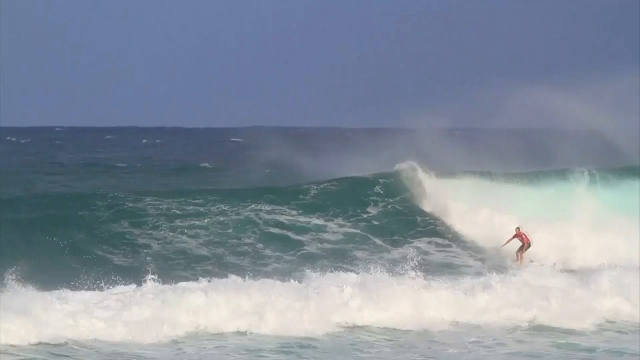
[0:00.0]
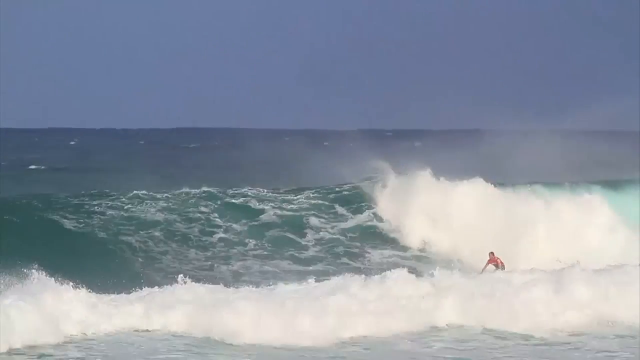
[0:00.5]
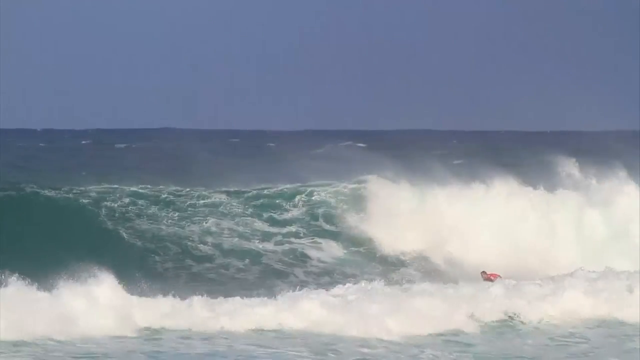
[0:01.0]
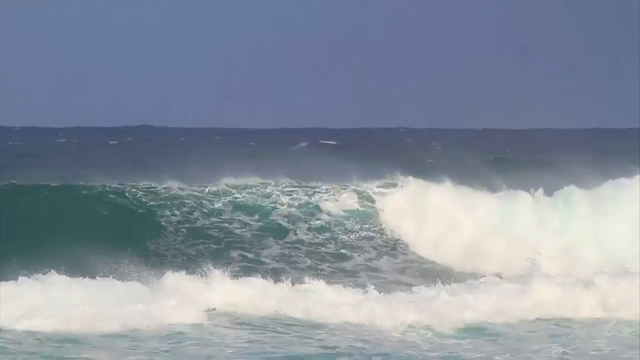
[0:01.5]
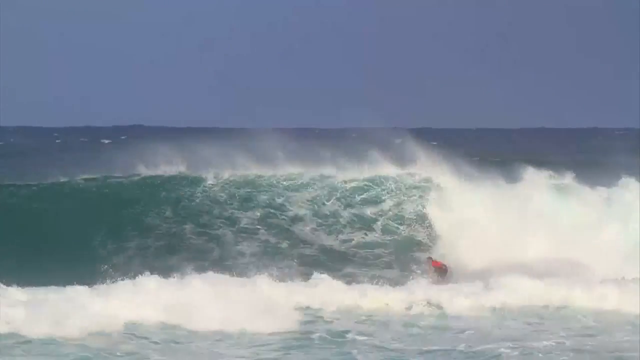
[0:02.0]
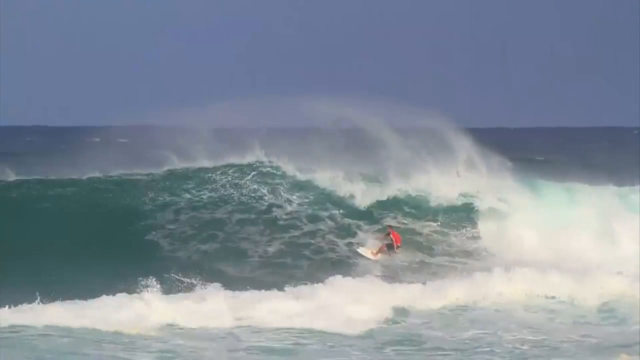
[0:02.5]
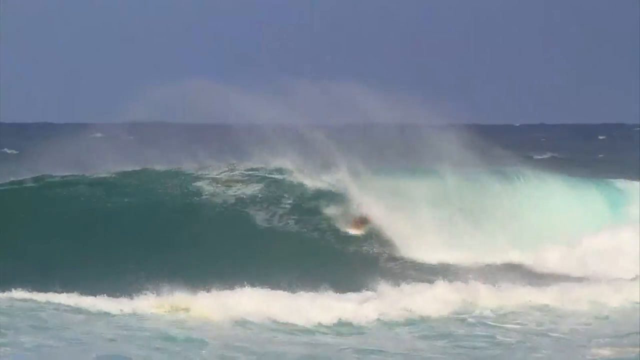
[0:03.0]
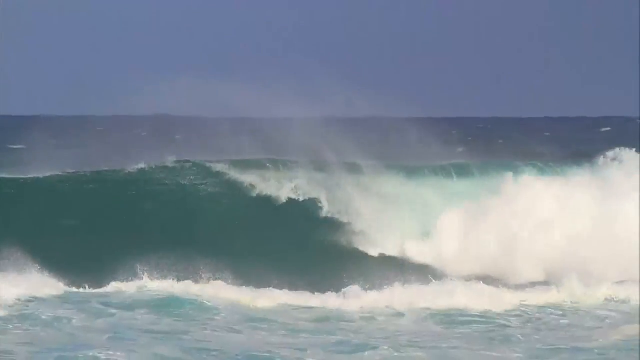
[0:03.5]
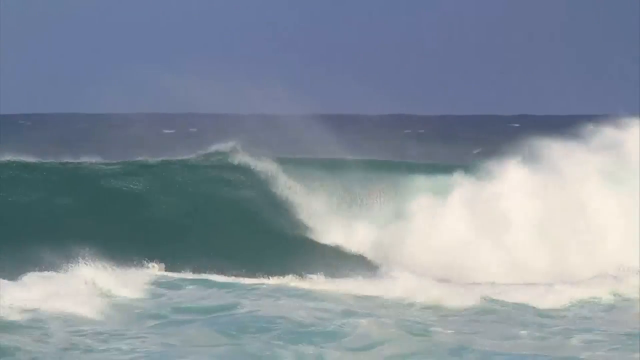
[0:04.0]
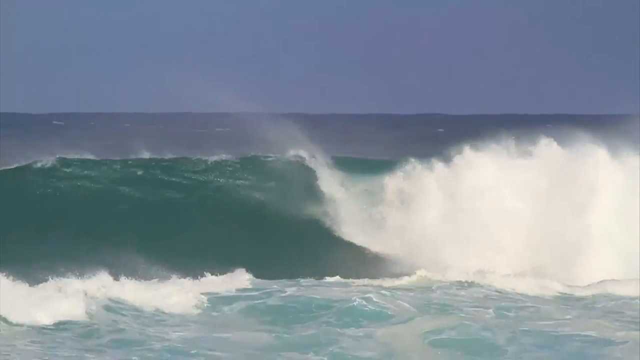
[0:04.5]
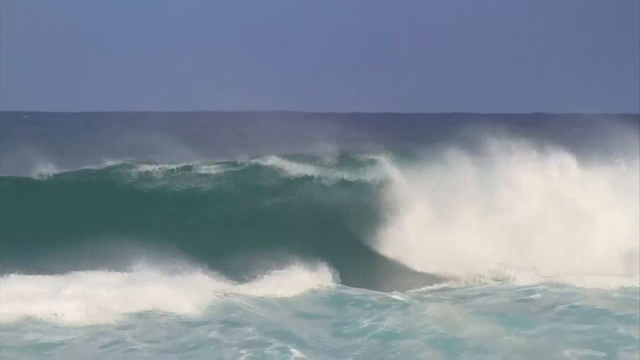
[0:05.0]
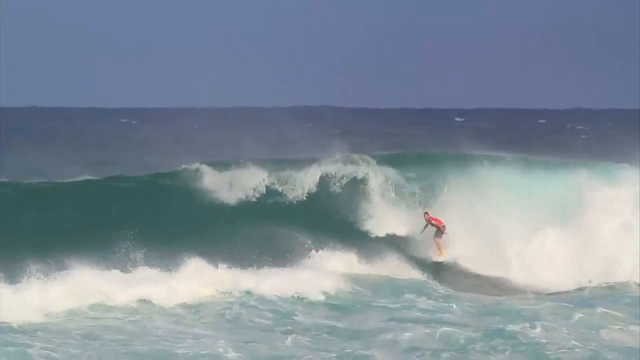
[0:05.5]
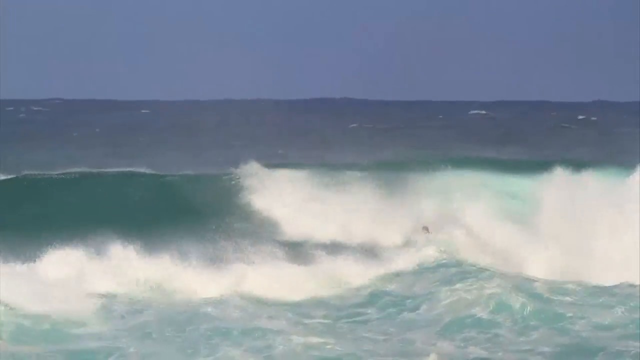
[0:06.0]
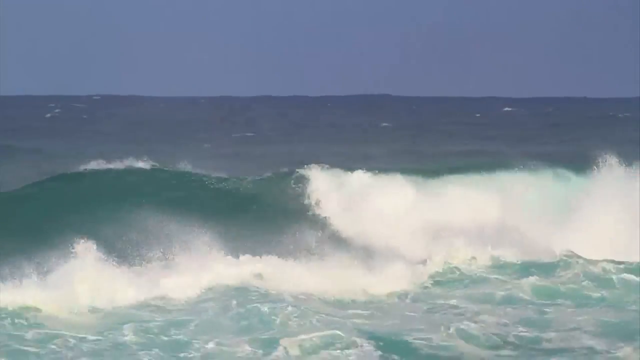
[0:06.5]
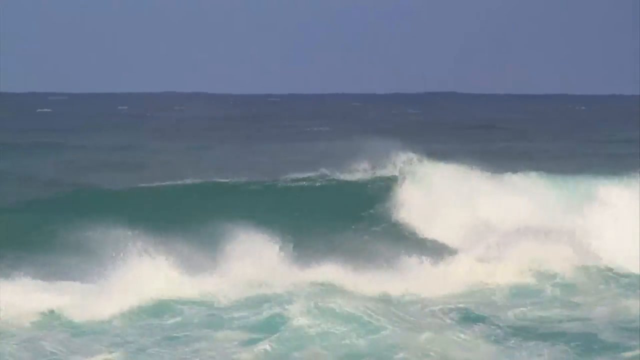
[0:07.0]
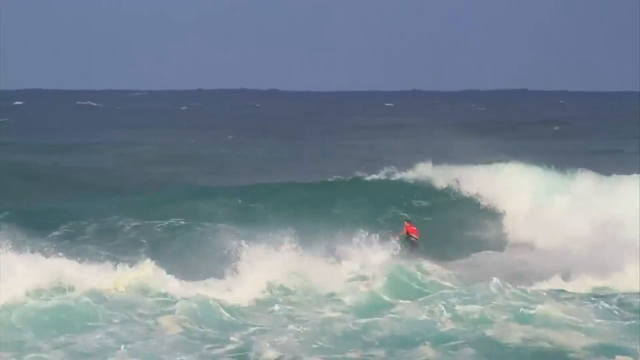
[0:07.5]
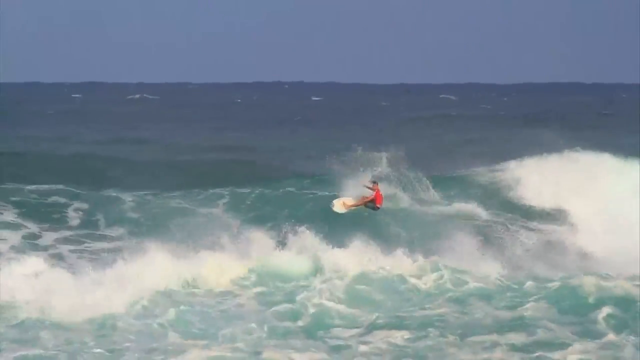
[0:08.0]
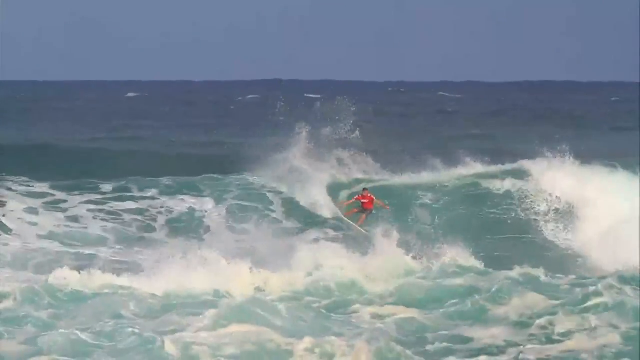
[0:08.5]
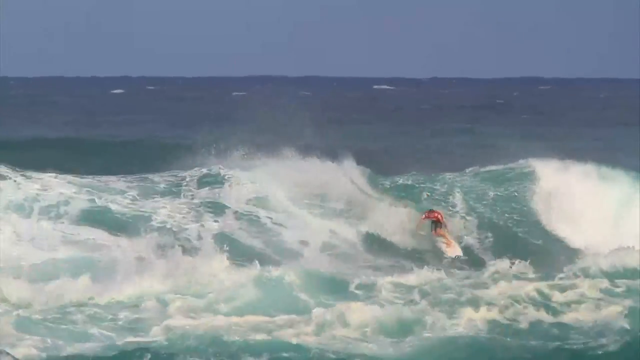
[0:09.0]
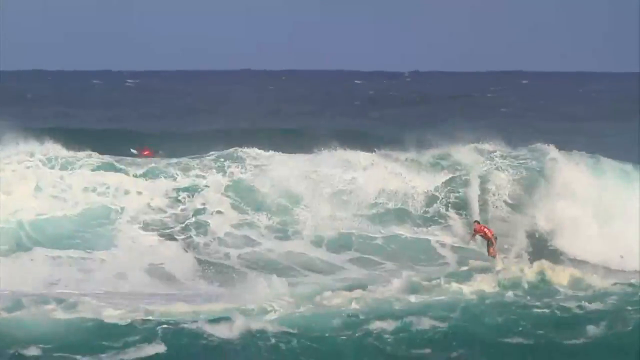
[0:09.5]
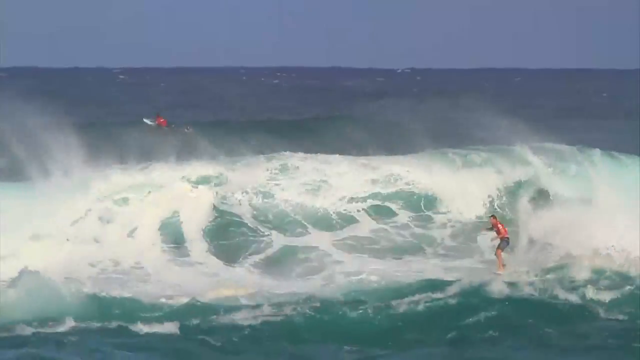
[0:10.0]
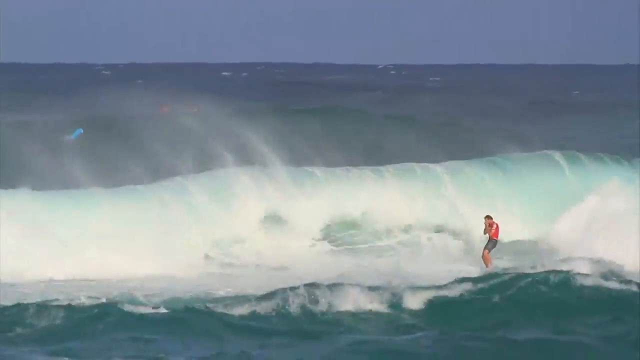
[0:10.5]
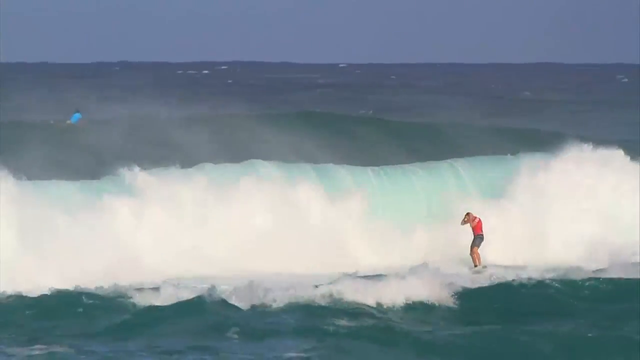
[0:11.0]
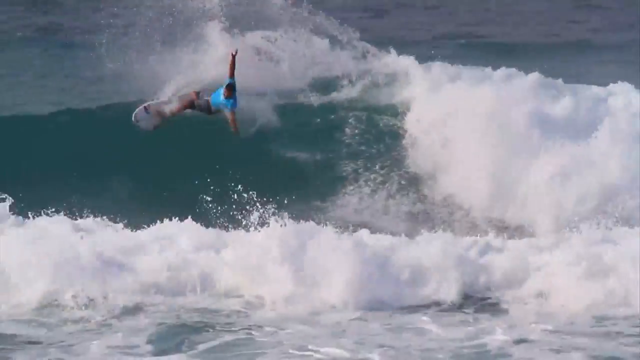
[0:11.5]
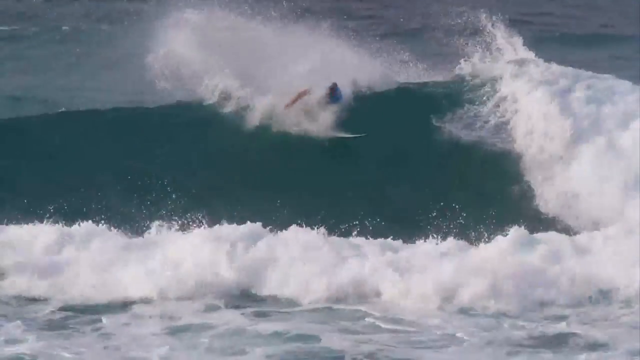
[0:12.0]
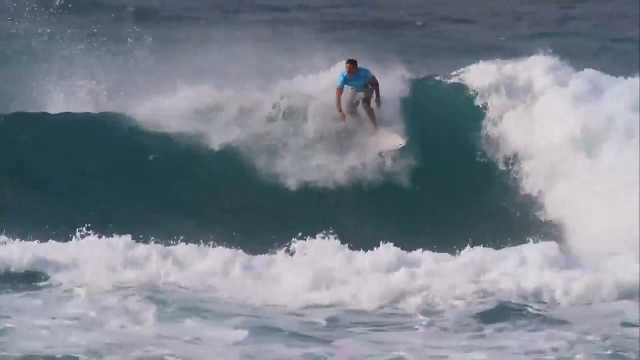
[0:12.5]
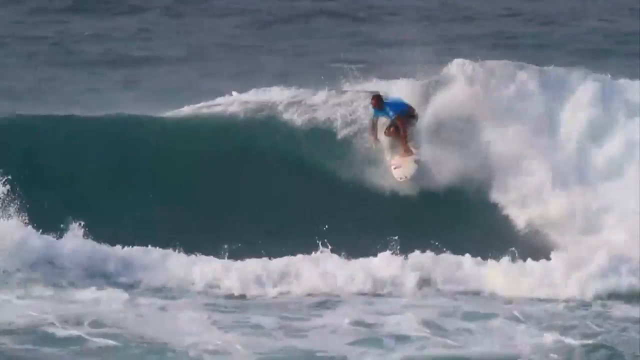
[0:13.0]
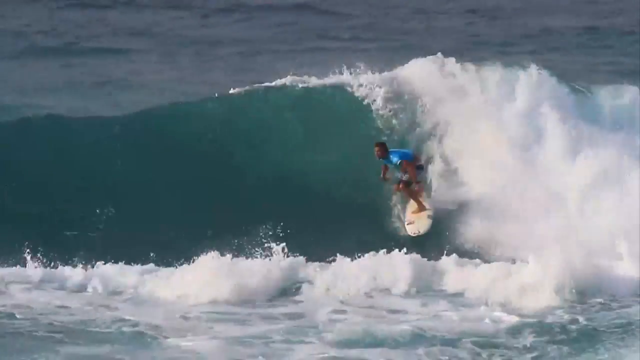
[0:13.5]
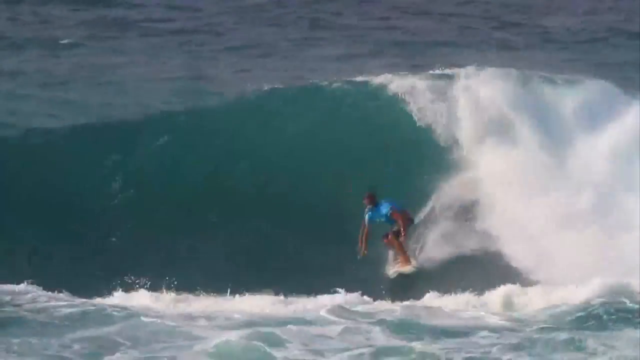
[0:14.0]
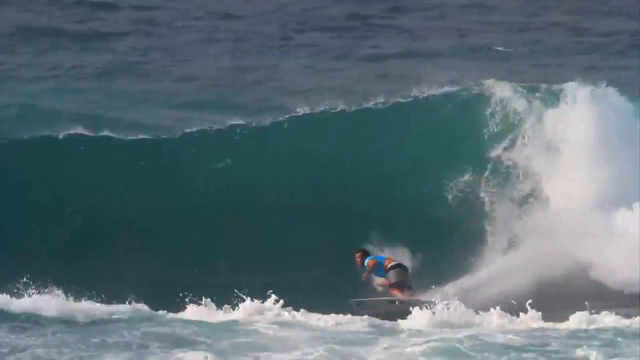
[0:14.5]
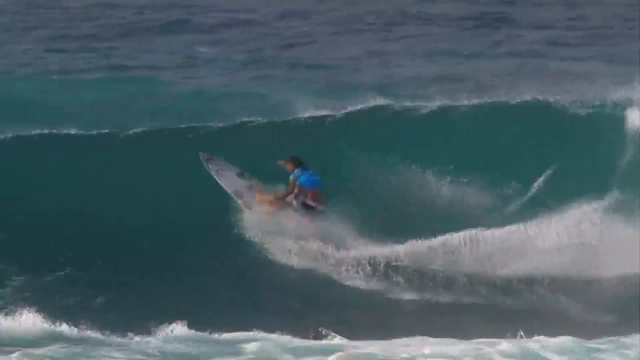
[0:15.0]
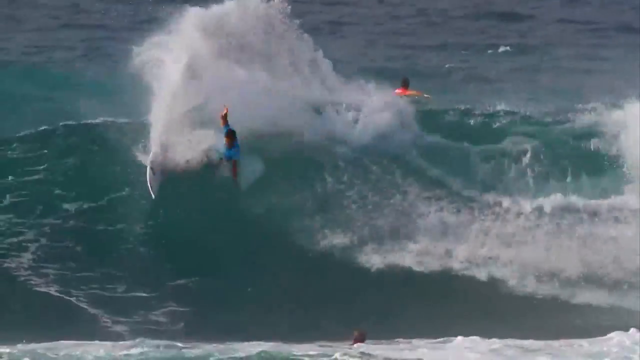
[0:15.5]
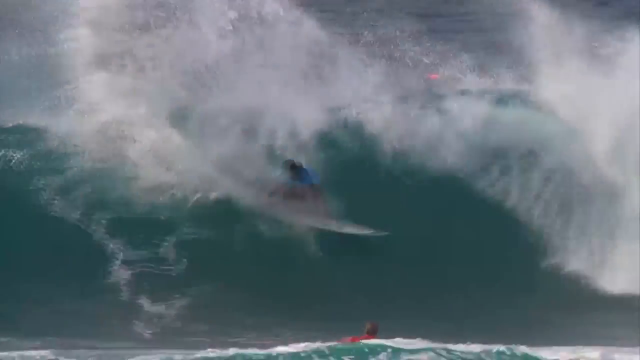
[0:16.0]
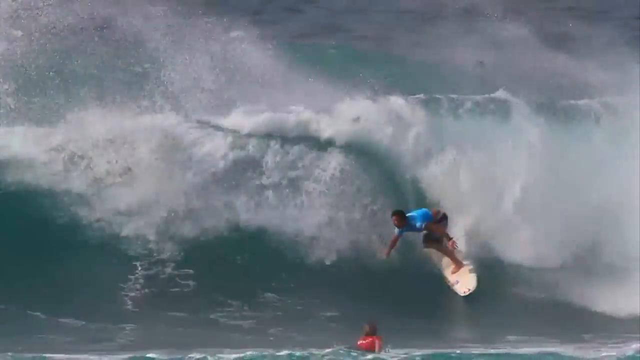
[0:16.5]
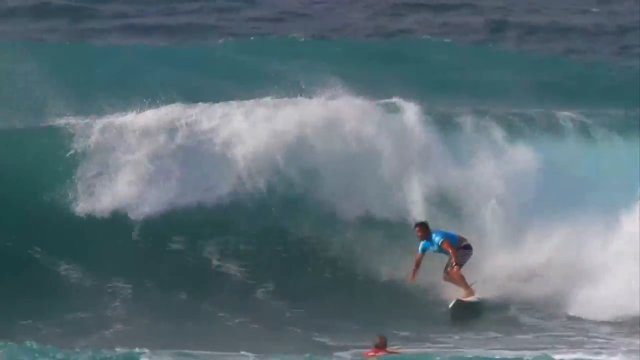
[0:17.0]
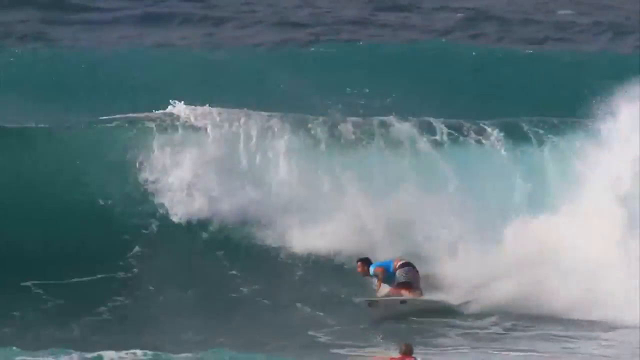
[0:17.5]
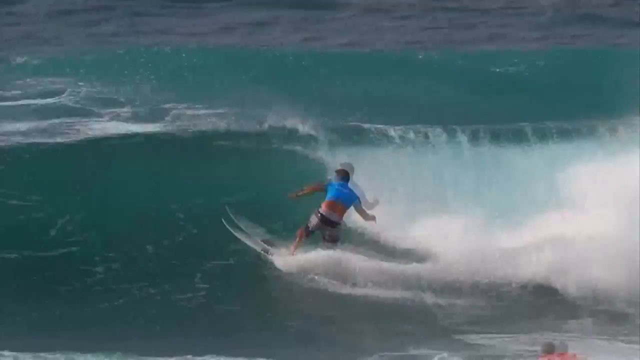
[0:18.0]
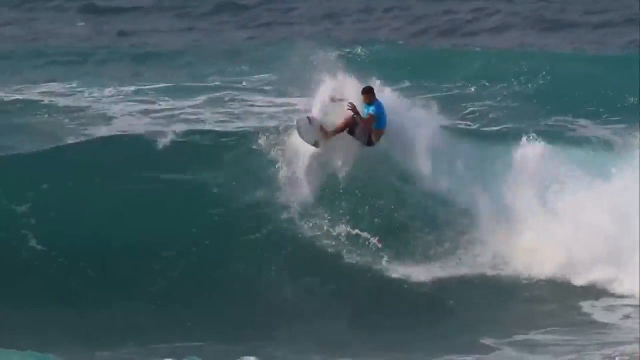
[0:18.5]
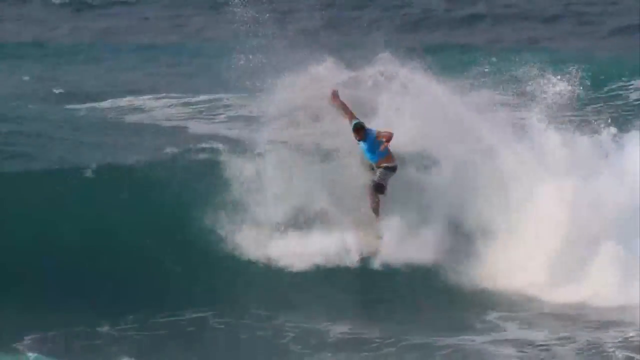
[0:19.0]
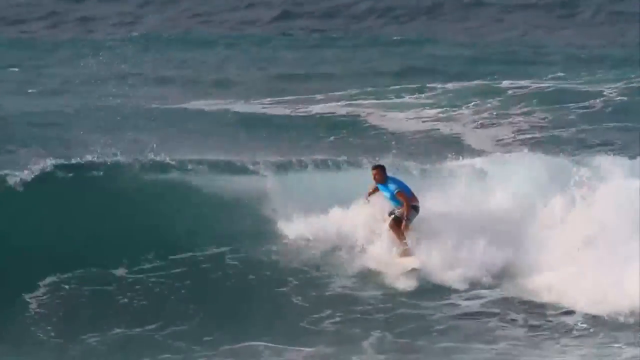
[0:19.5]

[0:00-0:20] The video opens in daylight; judging by the sun not shining very brightly and the dark bluish sky, it is apparently around five o'clock in the evening. An ocean with many vigorous waves moves rapidly, splashing and making white mist on the surface. Within the waves a person is surfboarding on a white bodyboard, wearing black shorts and a red shirt. A wave briefly engulfs him, but he emerges and begins surfing while standing up sideways, going up and around the tip of the waves. Later a second person is visible in the background, moving around on a surfboard similar to the first man. Toward the end, the man in the red shirt stops in place for a second to rearrange his shirt.